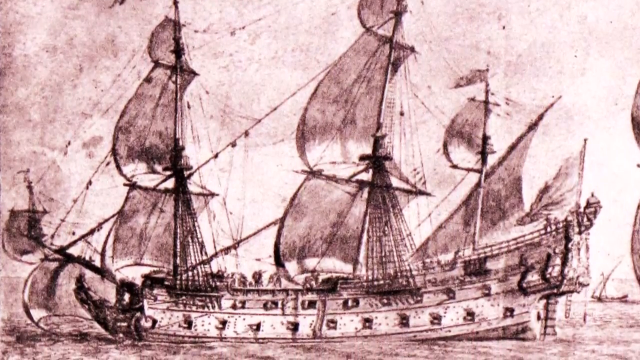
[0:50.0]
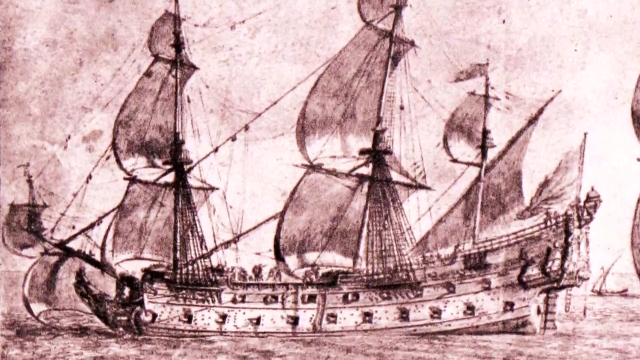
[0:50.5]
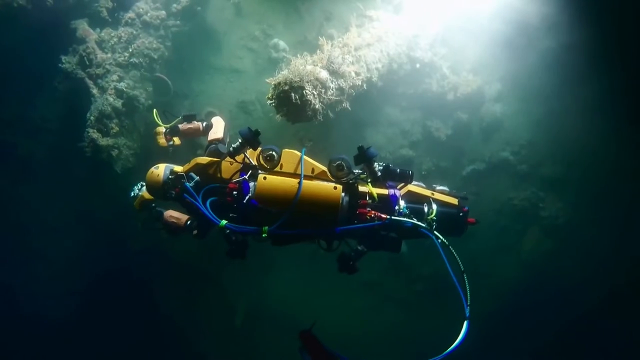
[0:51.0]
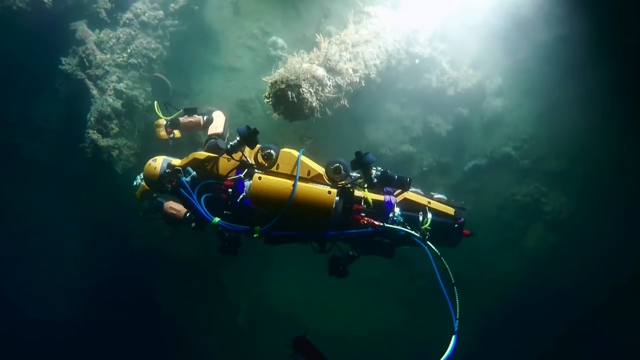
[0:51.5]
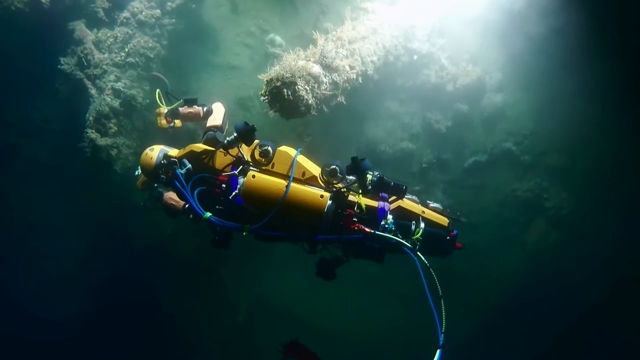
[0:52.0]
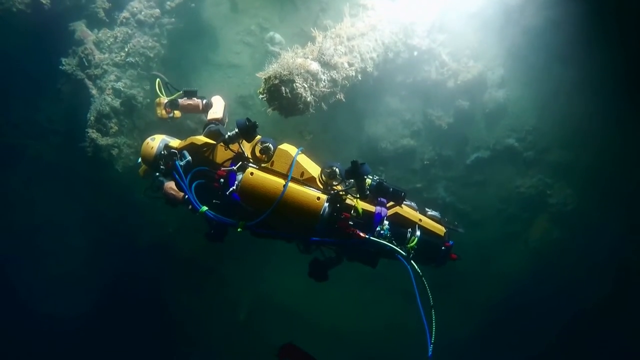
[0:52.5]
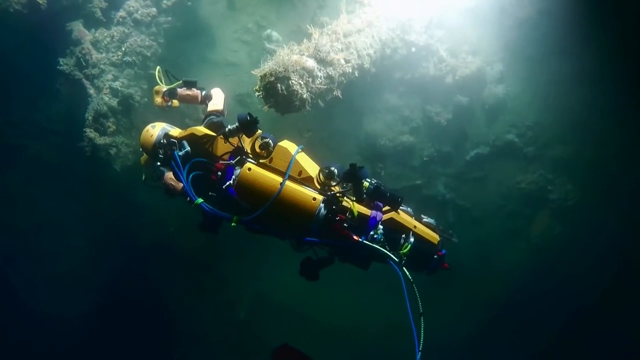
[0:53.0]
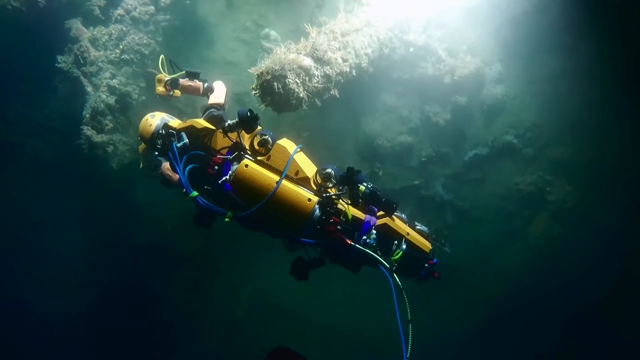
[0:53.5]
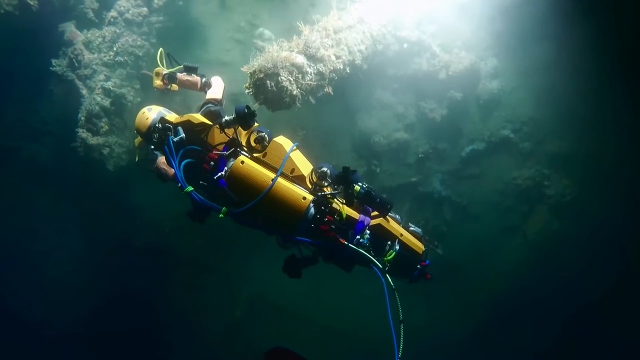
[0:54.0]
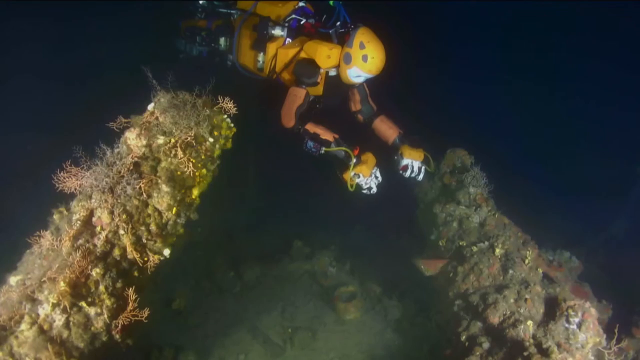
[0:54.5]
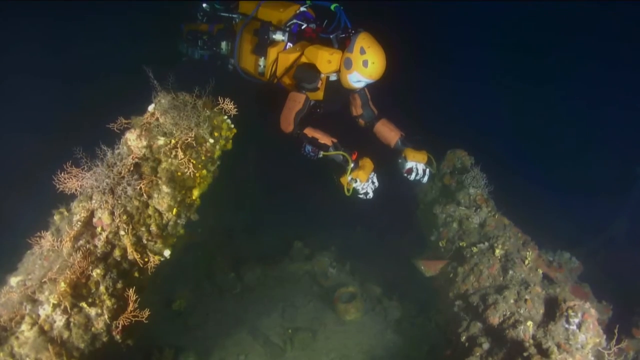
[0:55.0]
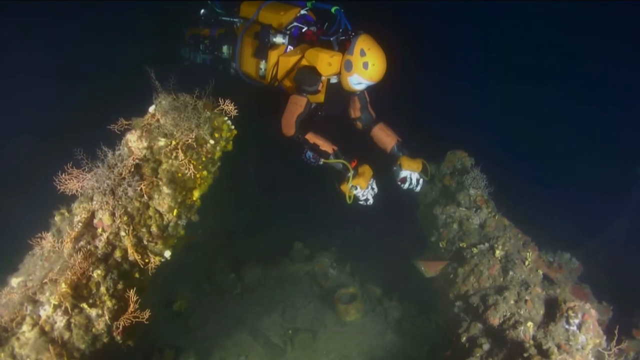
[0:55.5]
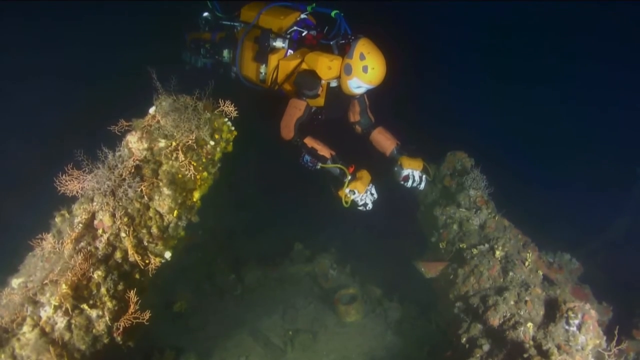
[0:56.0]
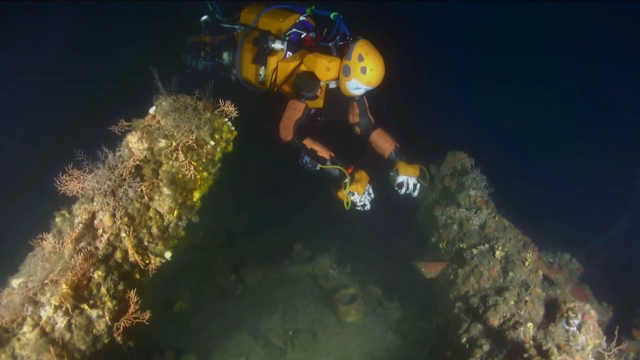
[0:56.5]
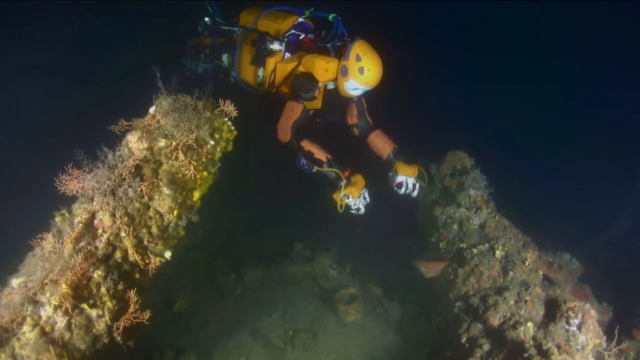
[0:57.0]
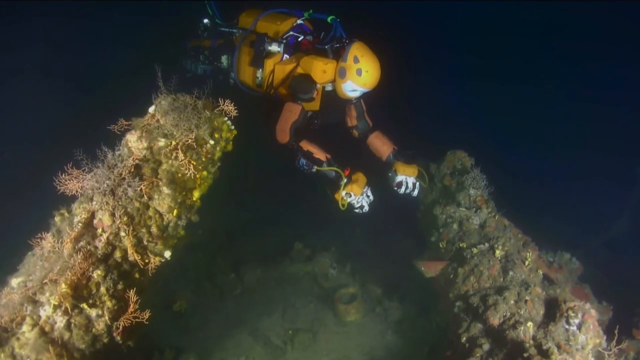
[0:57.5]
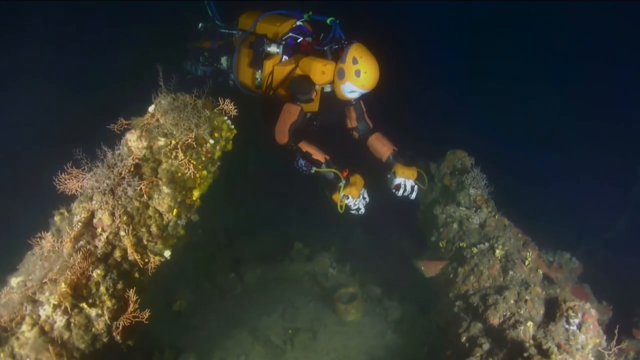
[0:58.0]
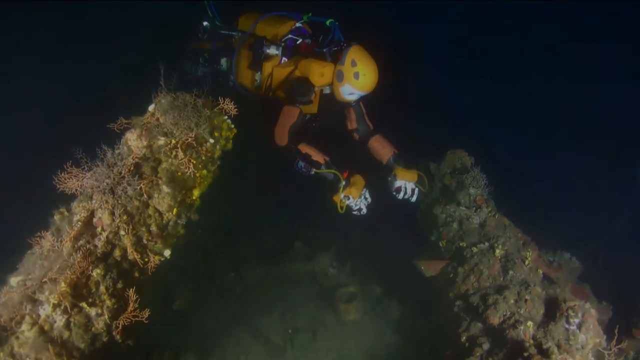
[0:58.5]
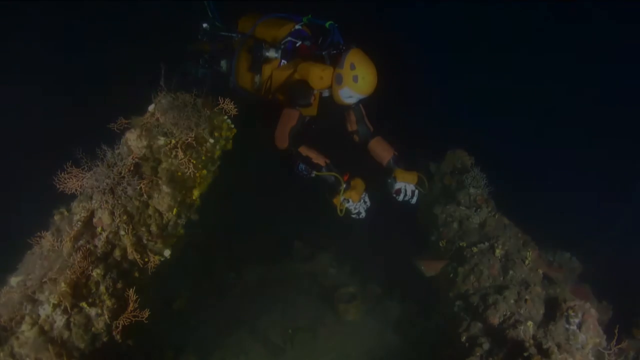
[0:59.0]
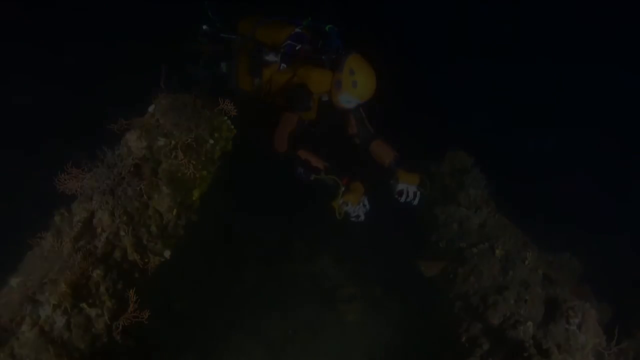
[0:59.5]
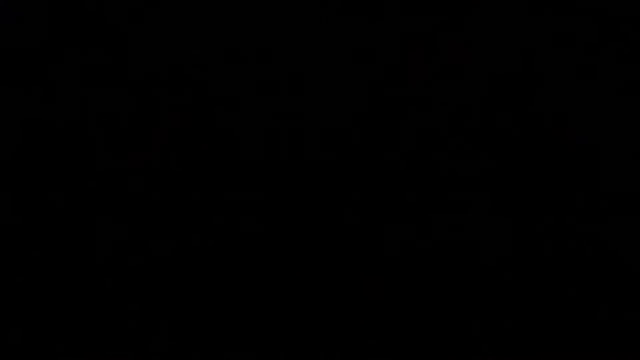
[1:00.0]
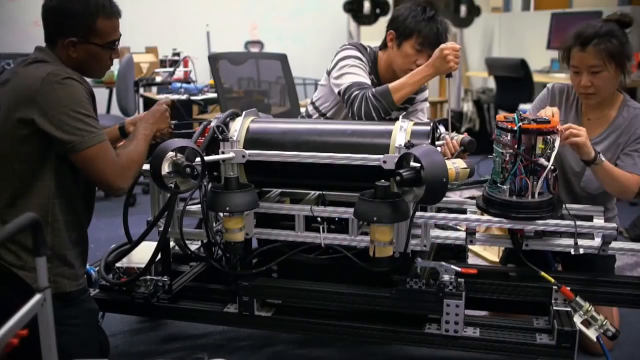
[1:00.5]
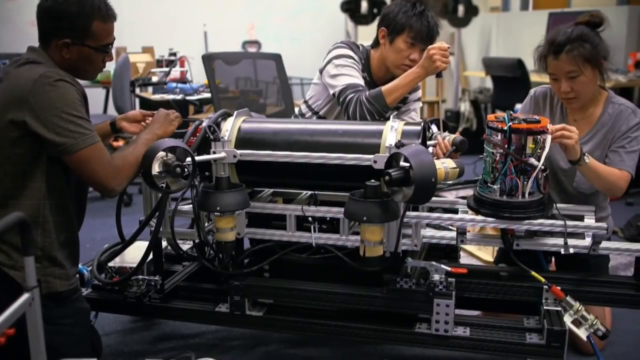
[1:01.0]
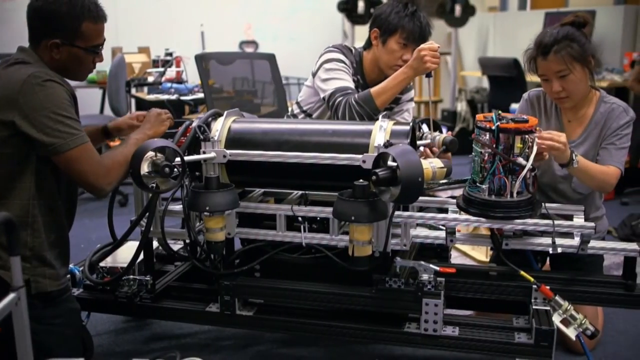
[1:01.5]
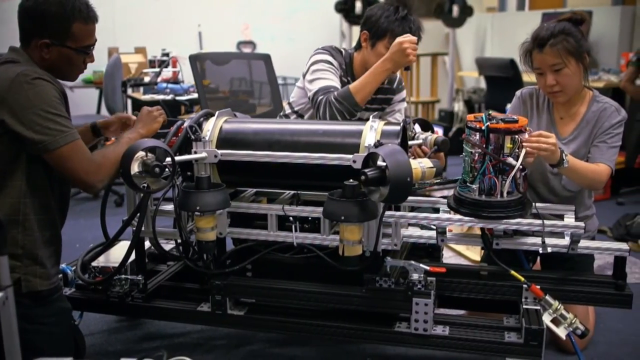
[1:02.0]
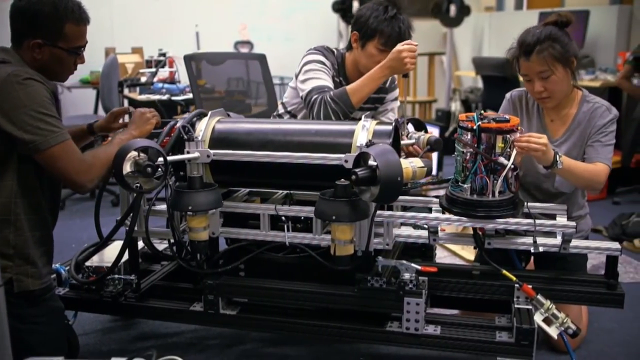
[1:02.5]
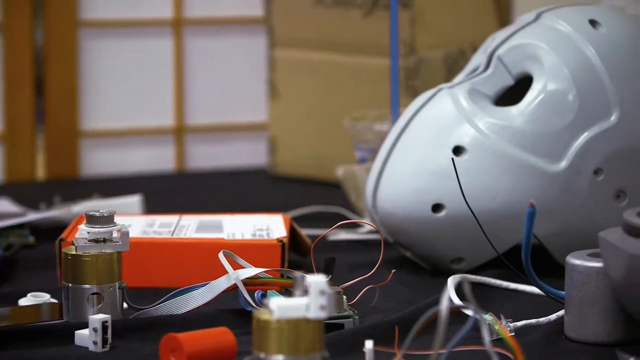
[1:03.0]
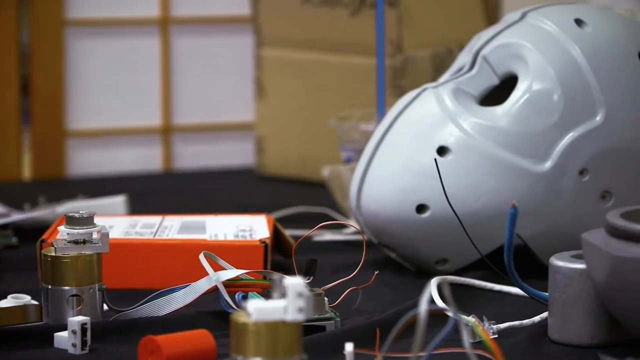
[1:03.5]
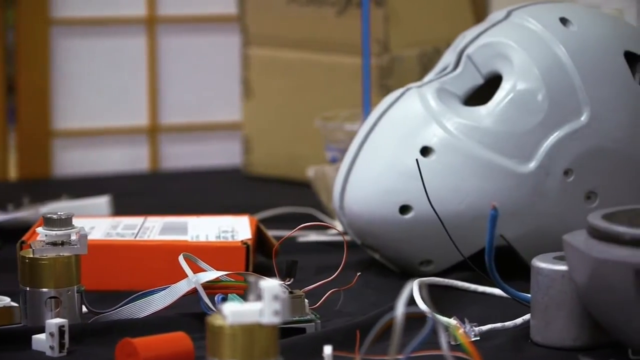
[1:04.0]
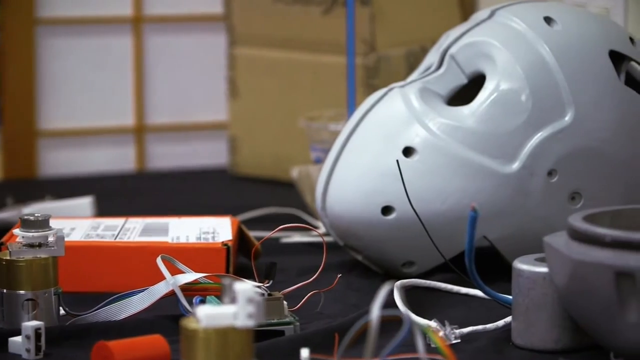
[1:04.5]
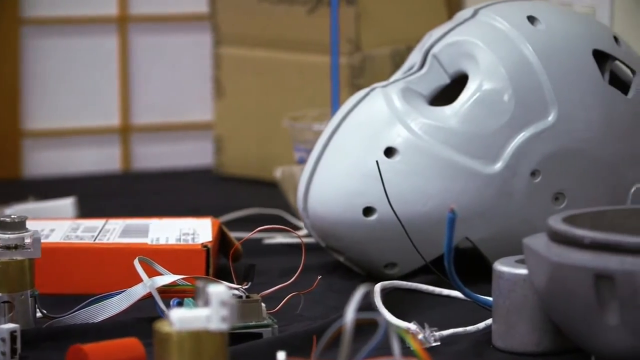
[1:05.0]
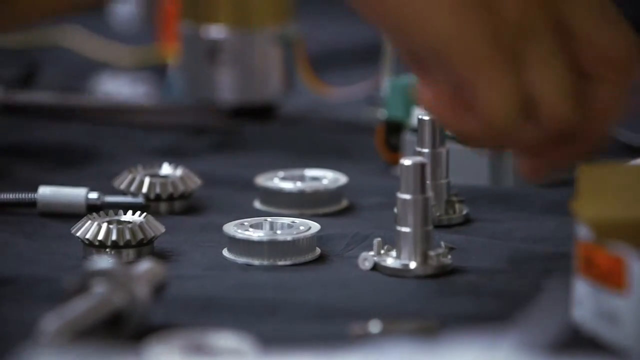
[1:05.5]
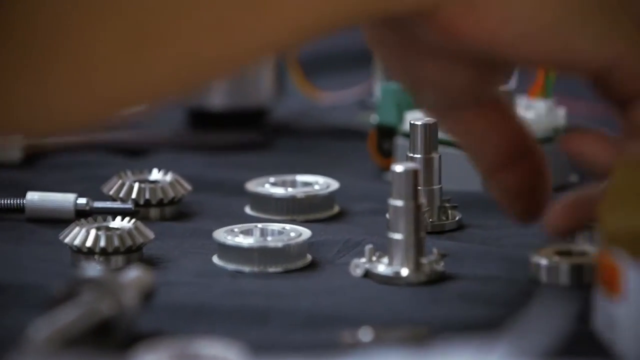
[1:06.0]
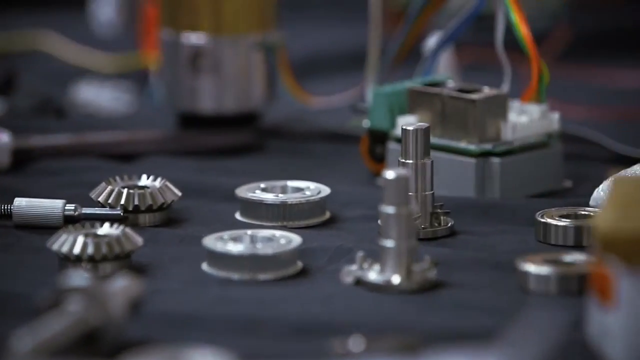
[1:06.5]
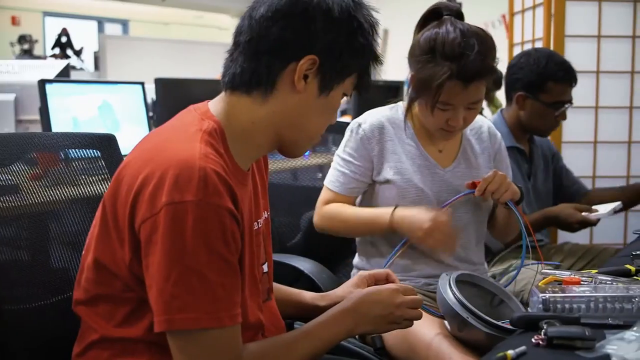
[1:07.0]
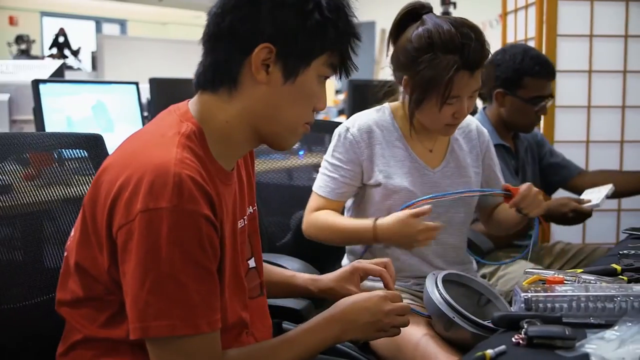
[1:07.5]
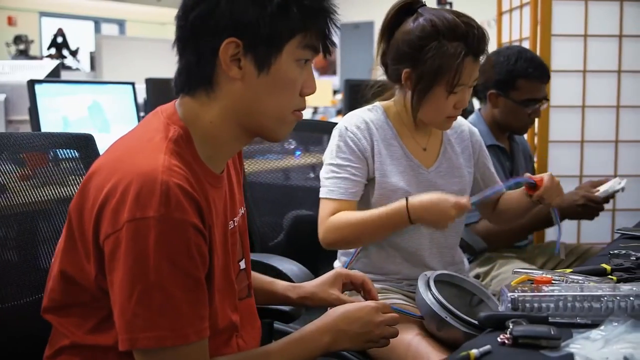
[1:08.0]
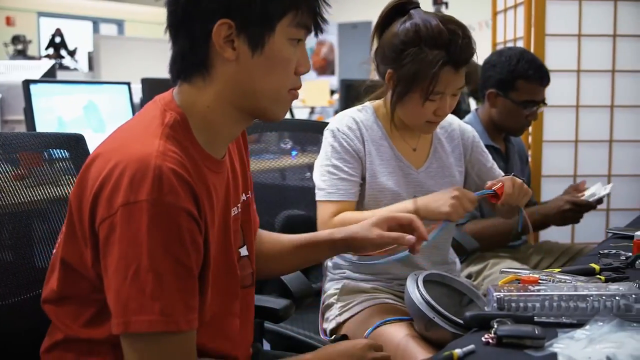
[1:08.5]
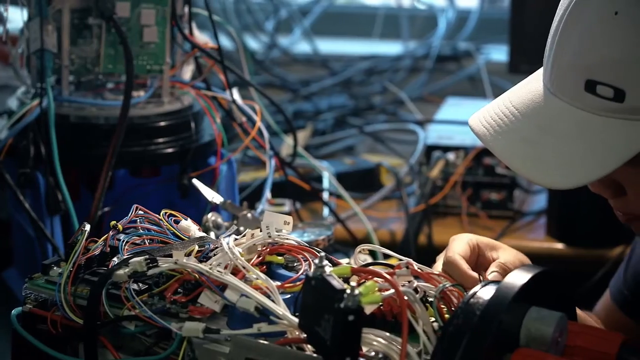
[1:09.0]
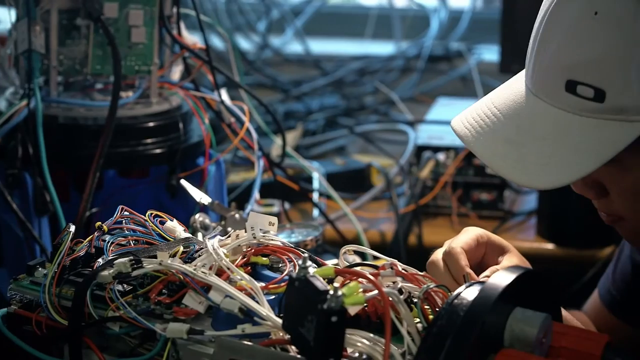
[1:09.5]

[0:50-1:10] Black-and-white images of ships sitting in the water, which look like they are from the 1800s, are shown as the camera slowly pans over them. The view then transitions to the water, this time brighter and not looking so UV-styled. The robot is clearly visible again, this time from a top view. The ground is visible too, with rocks everywhere and what looks like algae or other pieces of vegetation growing. The robot is seemingly moving its clawed hands as it flows closer to the ground. The view slowly transitions to a lab-style setting where what look like scientists or engineers work on some type of machinery. There are three of them, two males and one female, and they seem very focused. One of the males, on the left, wears glasses. The machinery seems to be mostly metallic or silver, with pieces of black. Next comes an image of the mask from the same humanoid robot, which possibly suggests they are working on that robot.